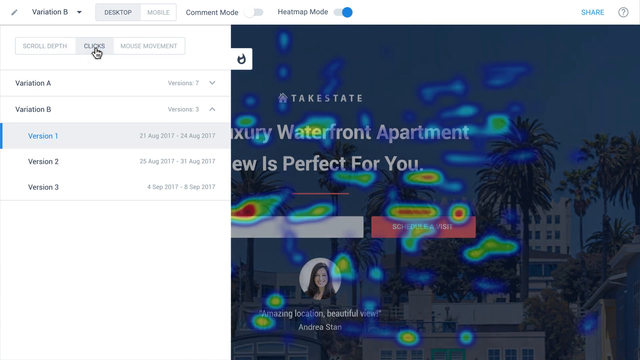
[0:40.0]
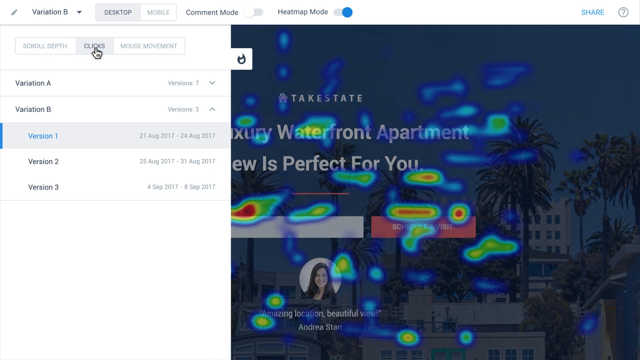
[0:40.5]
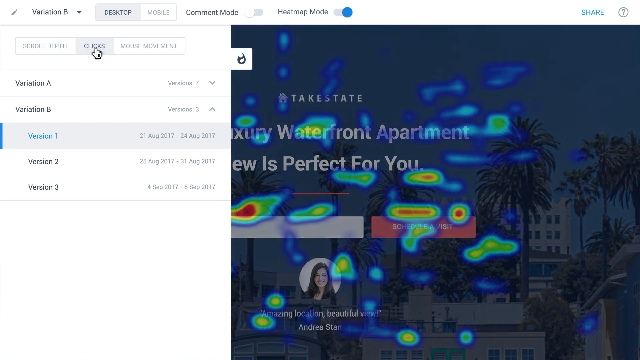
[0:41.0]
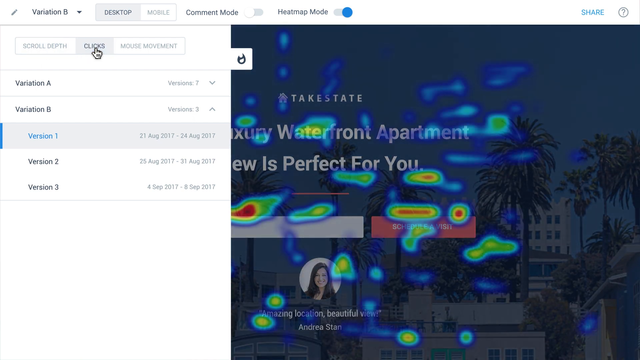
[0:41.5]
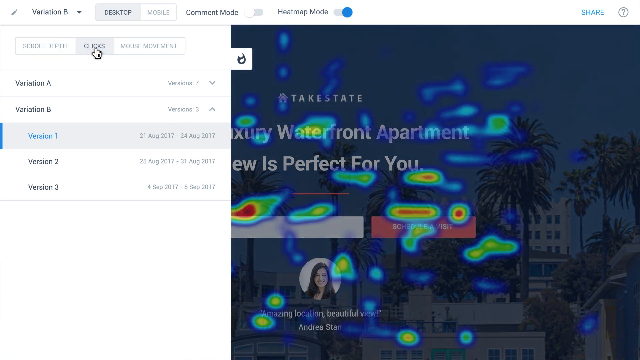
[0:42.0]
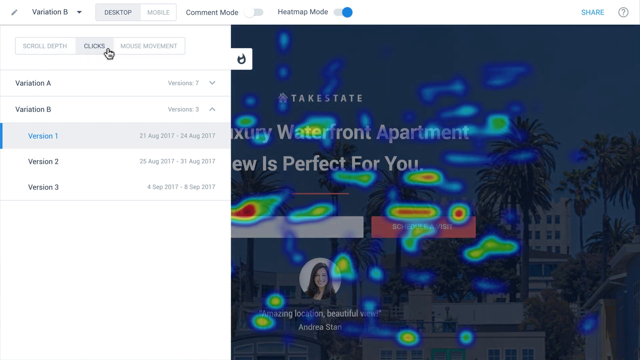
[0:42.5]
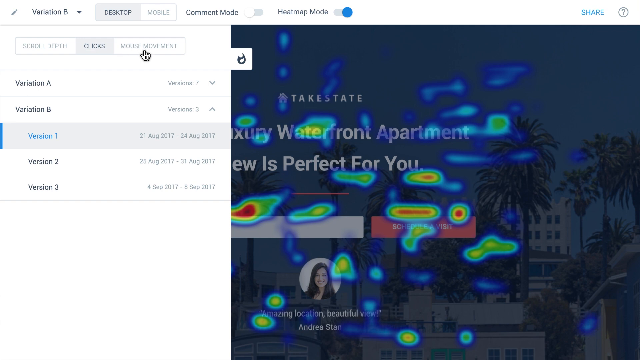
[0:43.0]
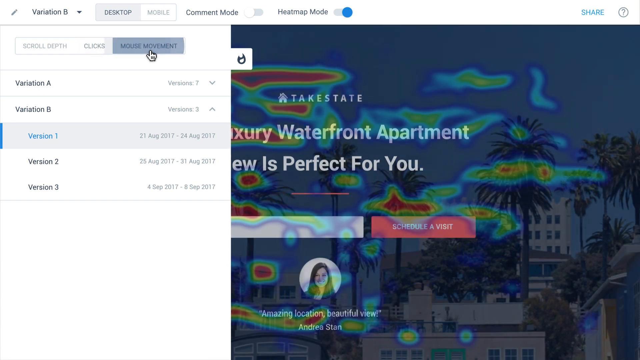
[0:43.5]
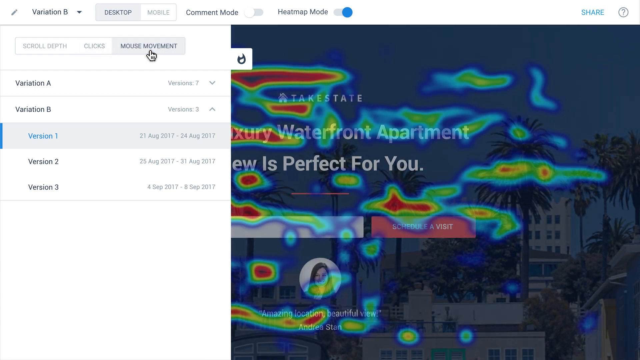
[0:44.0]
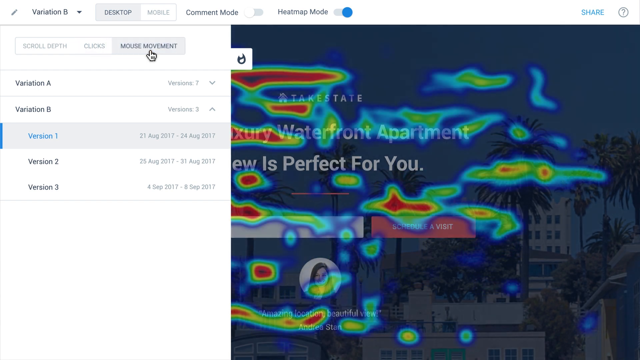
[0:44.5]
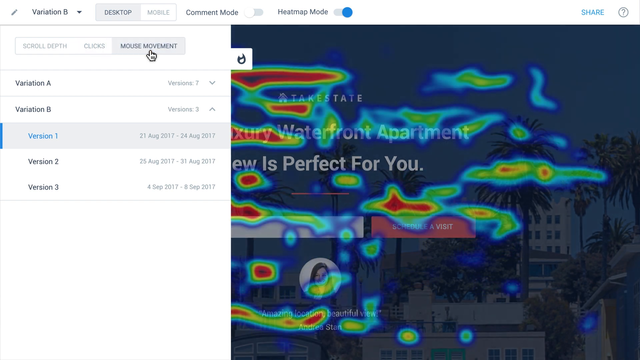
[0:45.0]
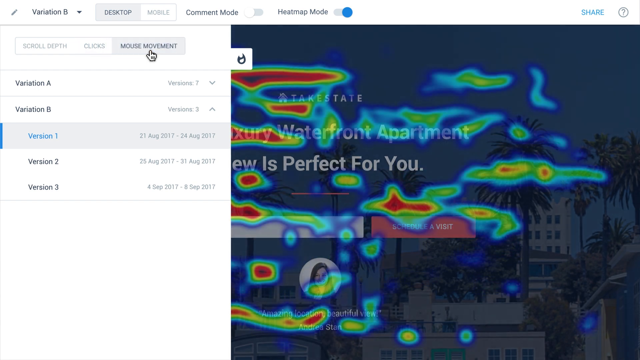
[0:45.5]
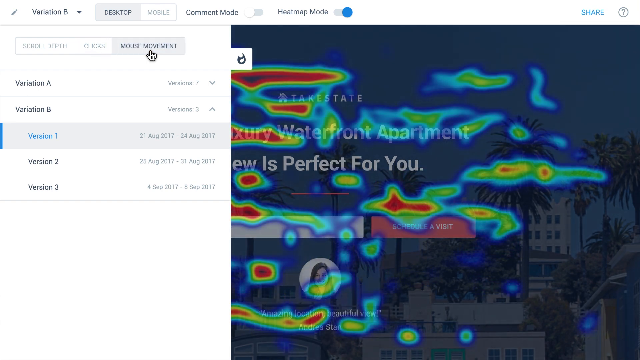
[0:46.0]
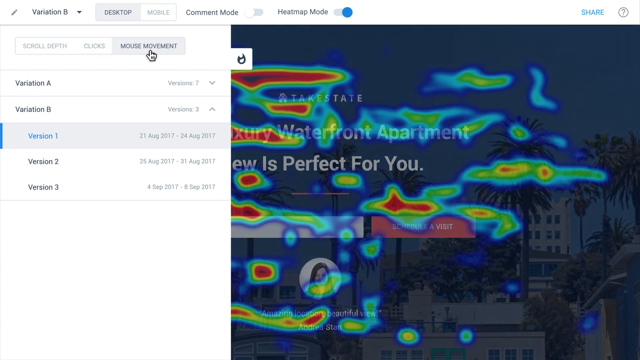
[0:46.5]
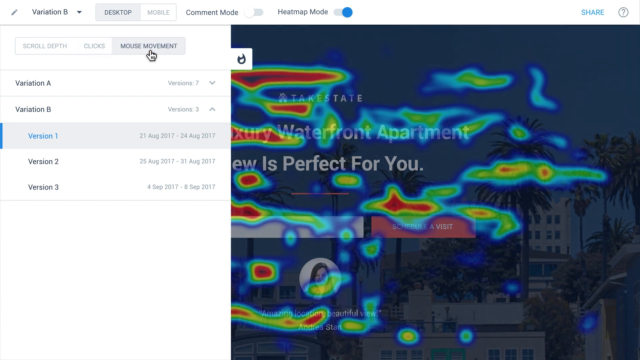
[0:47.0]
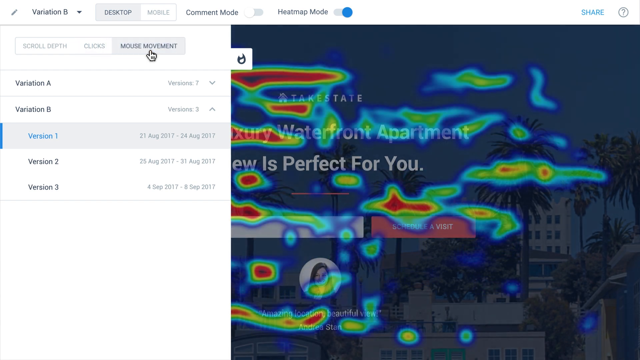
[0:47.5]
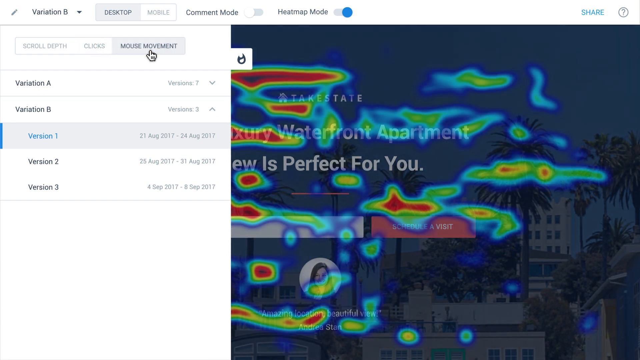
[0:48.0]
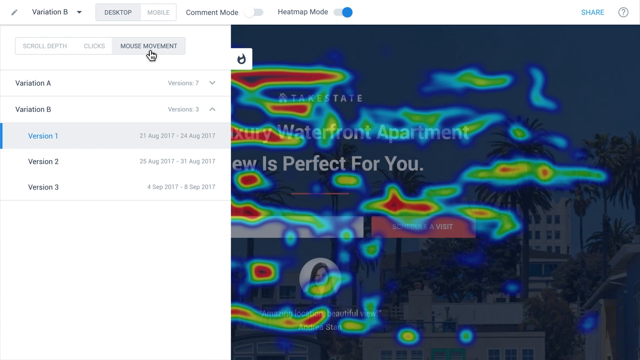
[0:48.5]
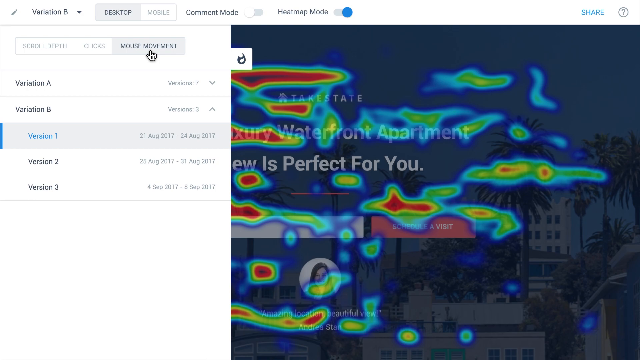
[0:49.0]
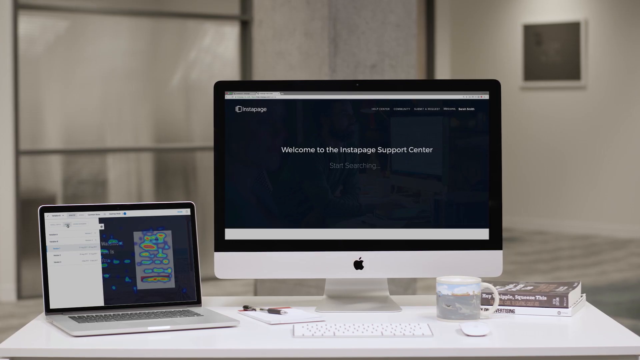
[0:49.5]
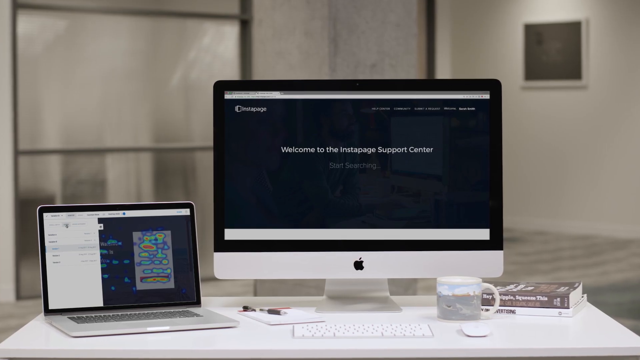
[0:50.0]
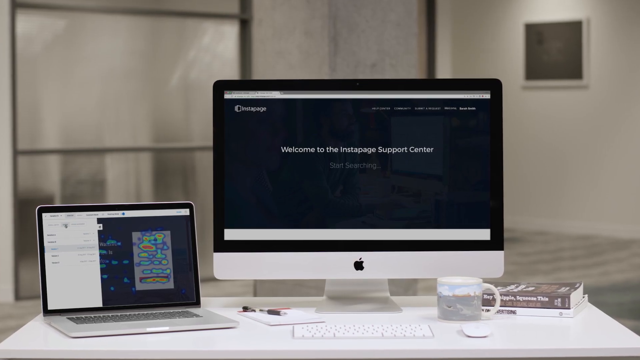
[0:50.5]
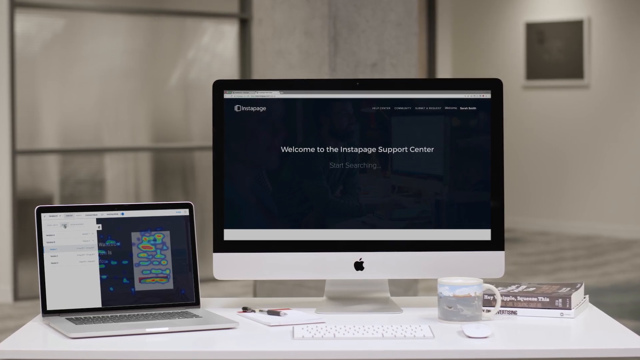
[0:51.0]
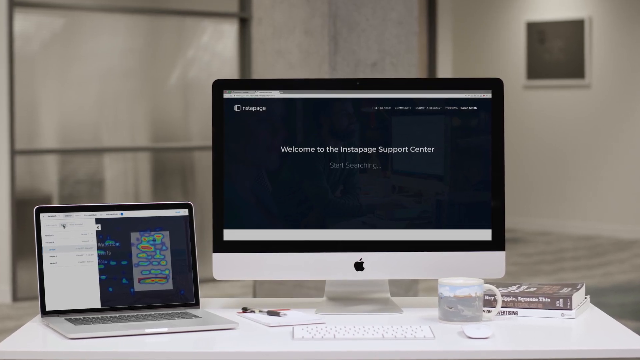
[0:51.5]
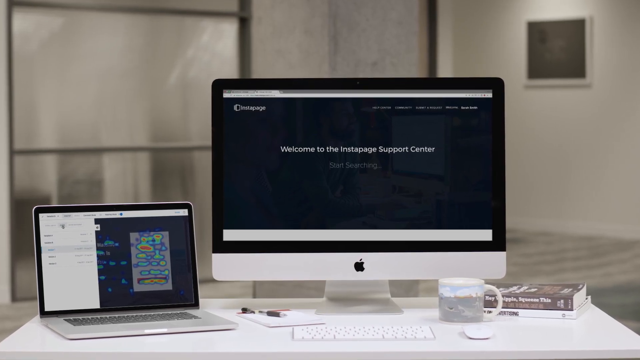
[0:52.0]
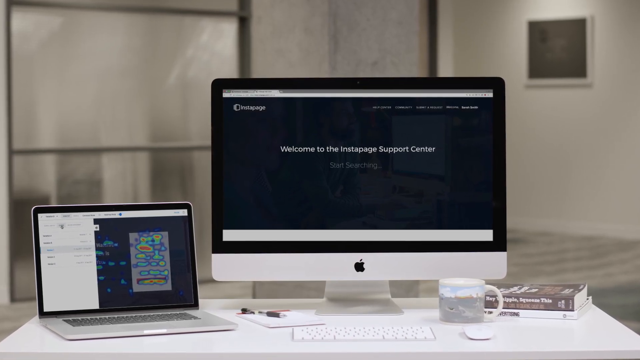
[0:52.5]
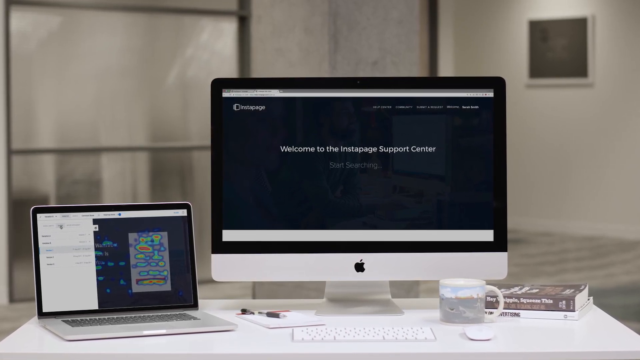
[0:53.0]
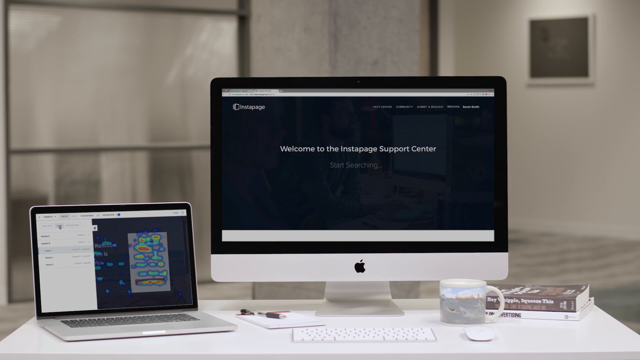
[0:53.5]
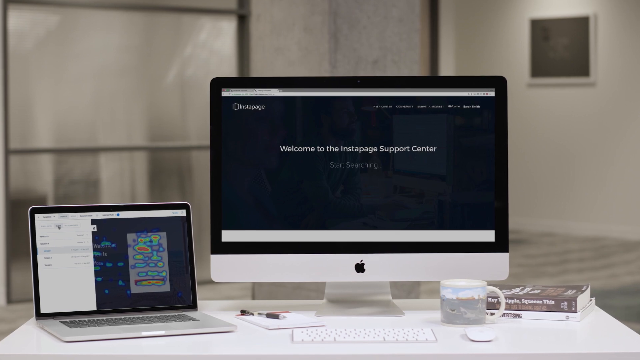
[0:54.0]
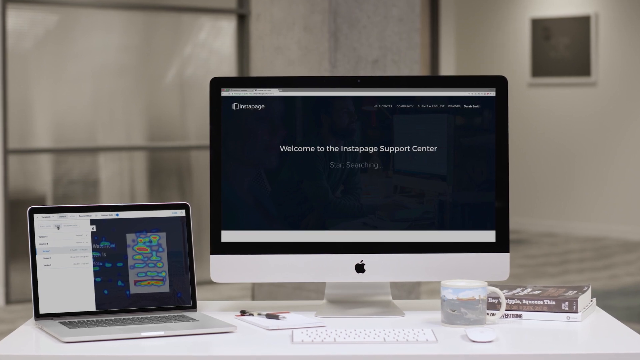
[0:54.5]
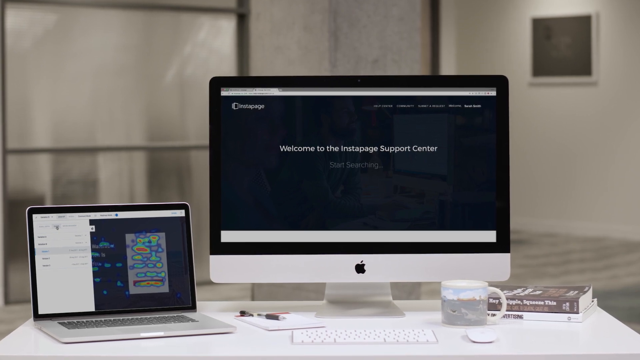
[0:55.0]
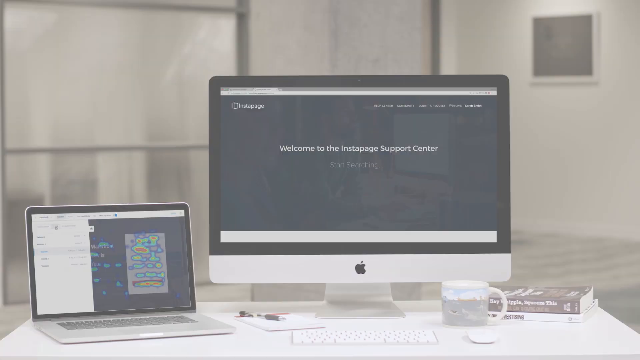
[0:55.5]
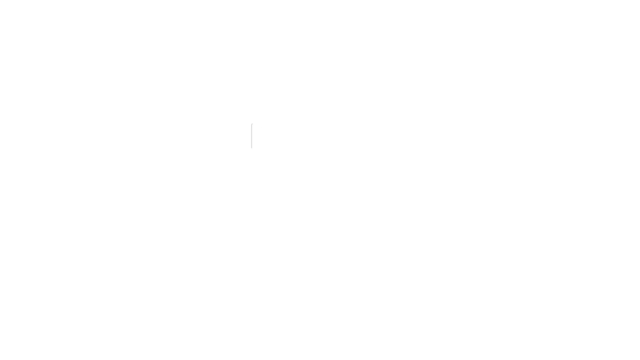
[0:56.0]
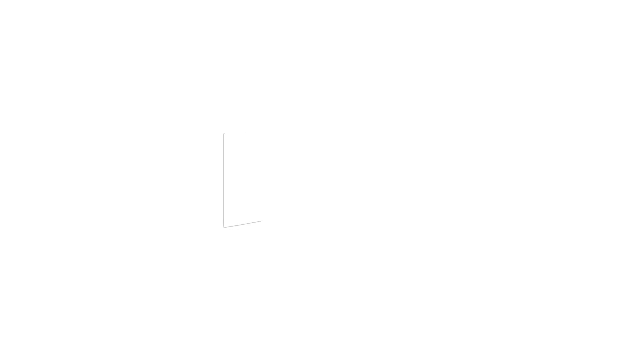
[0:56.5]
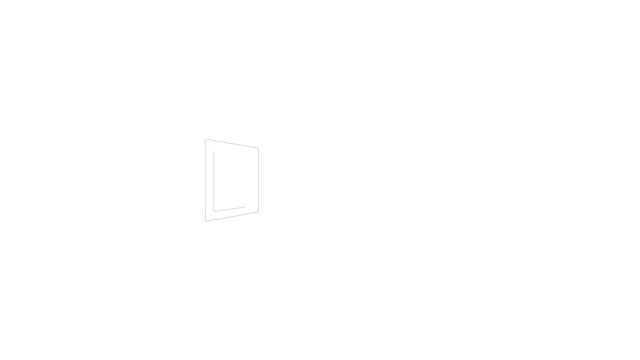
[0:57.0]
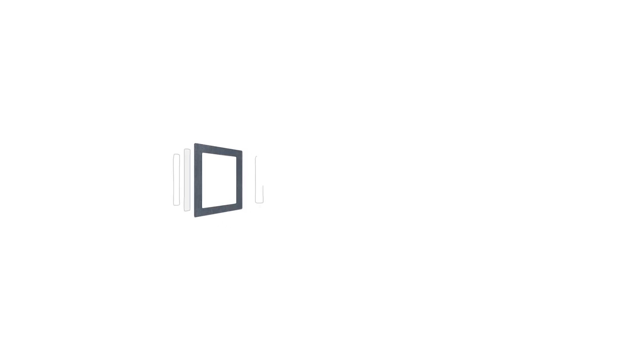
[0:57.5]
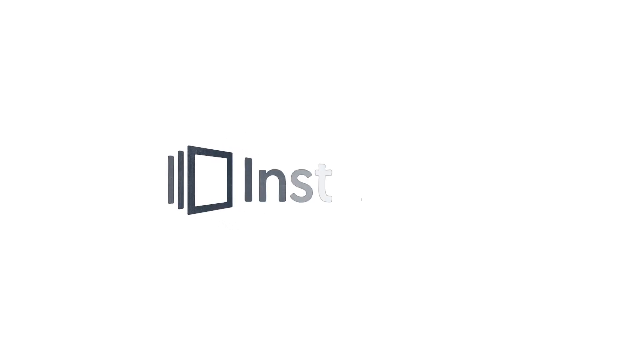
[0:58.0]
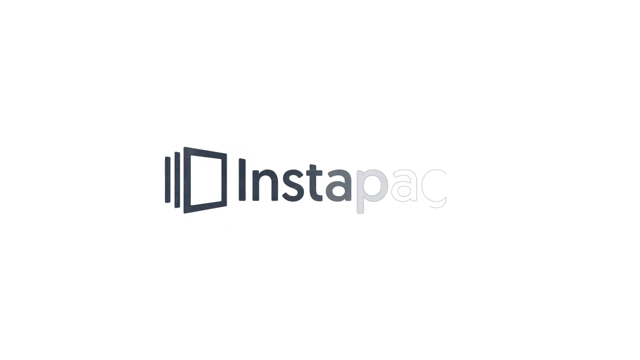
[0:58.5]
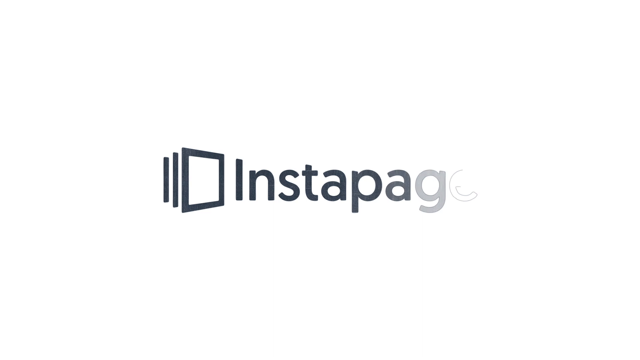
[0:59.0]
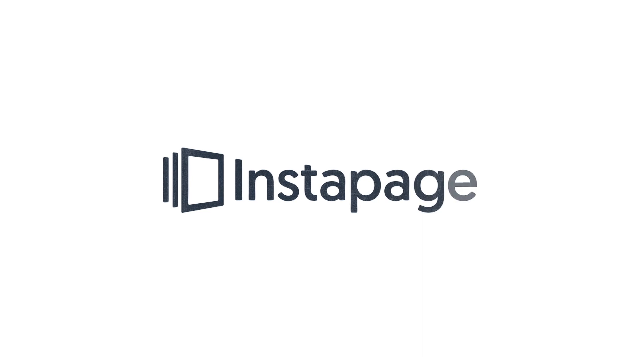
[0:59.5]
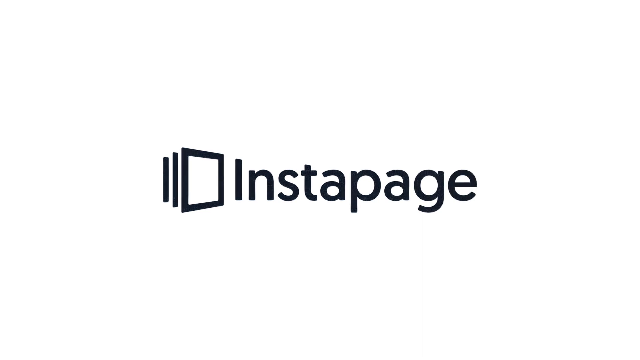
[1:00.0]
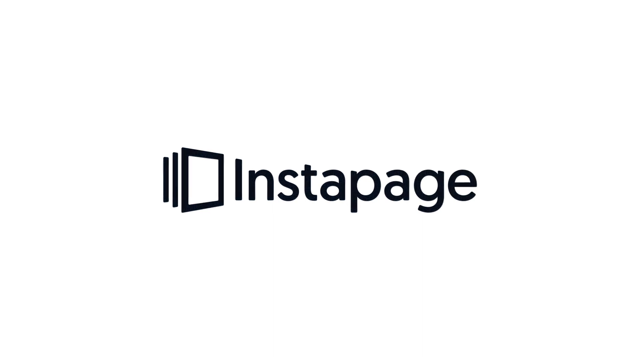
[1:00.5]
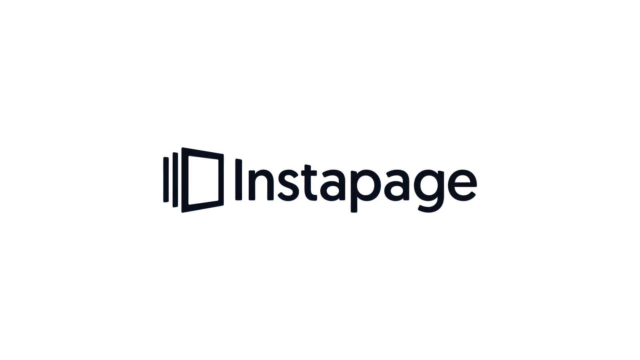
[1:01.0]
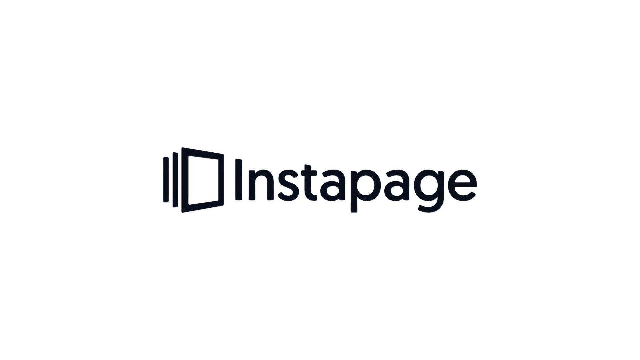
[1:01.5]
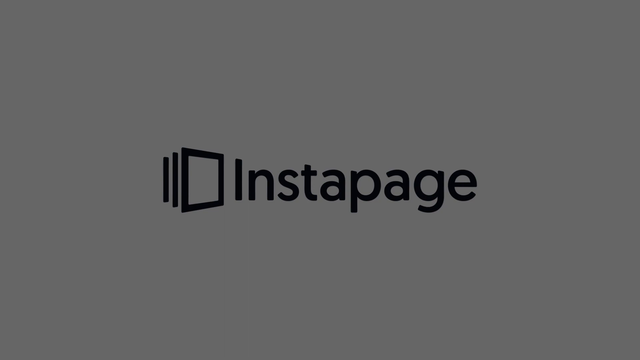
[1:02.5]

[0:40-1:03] They click on mouse movement. The video cuts back to the office picture, where the laptop shows a dark page whose tab says "welcome to the Instapage Support Center." The view zooms in a little, slowly, and then suddenly the page turns white and a black square appears on the screen with two lines indicating its depth. The Instapage name appears letter by letter, filling in black. The left side of the smaller laptop still has the heat map page on the screen. There are no captions pointing out any significant differences or changes.